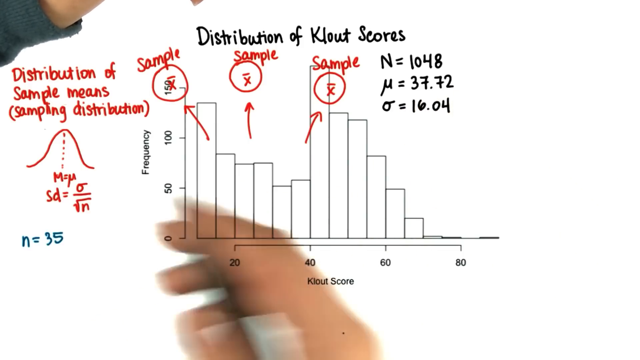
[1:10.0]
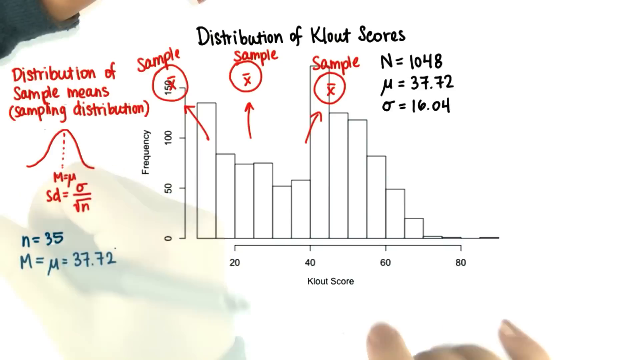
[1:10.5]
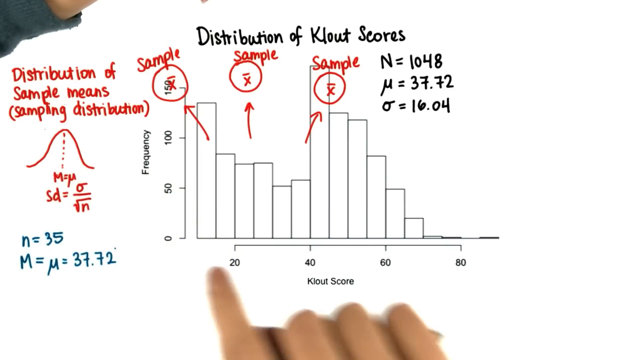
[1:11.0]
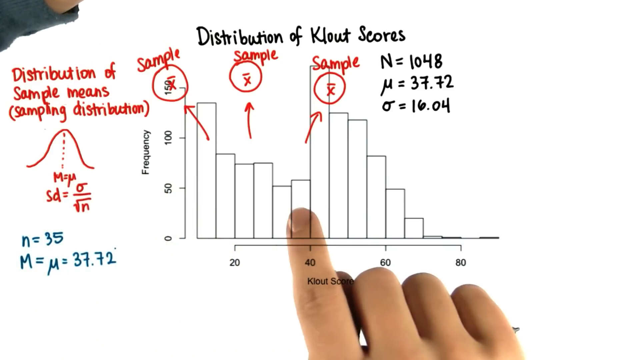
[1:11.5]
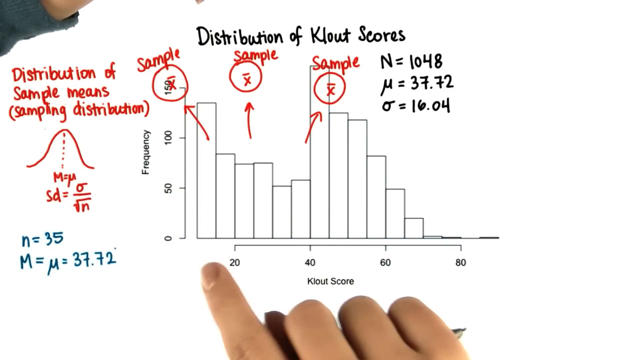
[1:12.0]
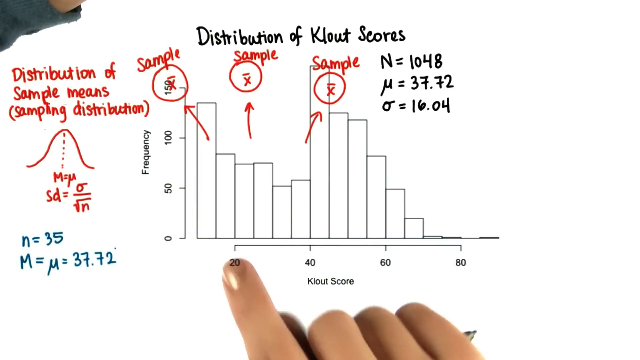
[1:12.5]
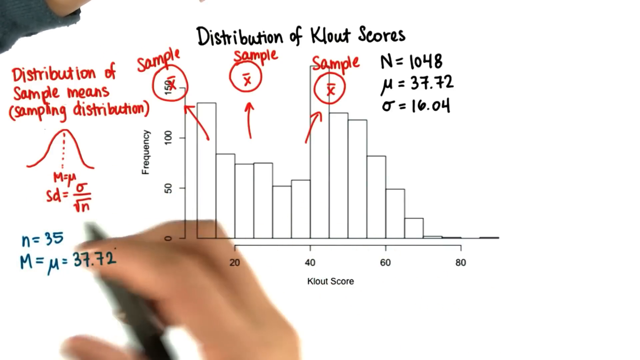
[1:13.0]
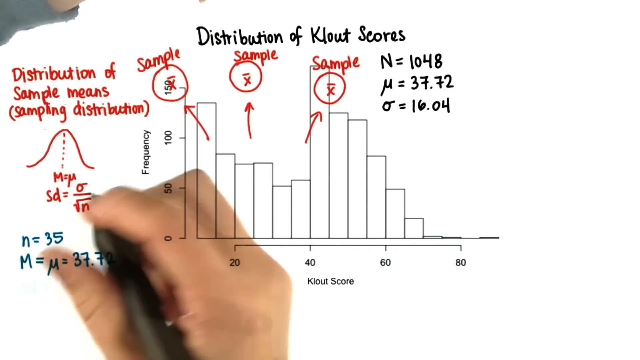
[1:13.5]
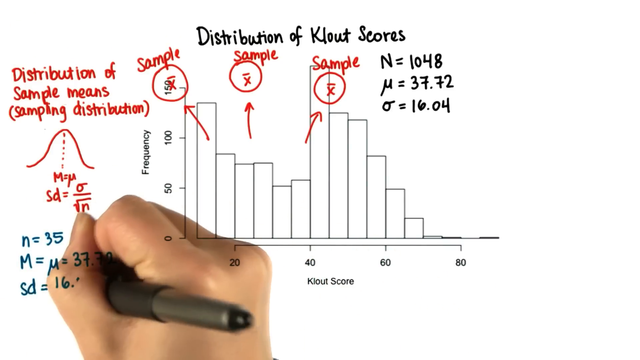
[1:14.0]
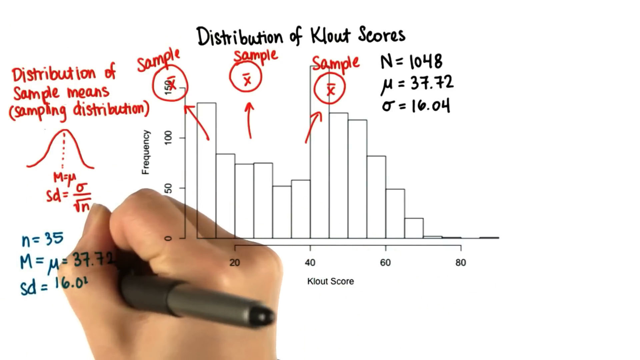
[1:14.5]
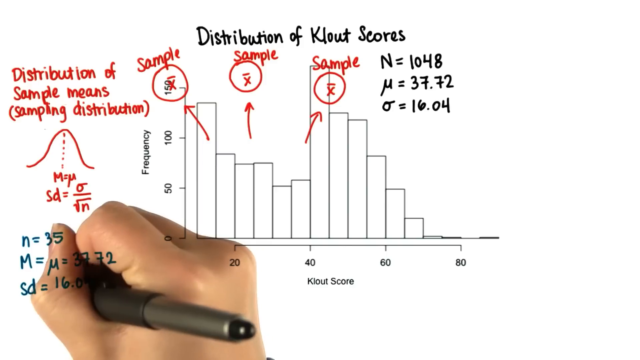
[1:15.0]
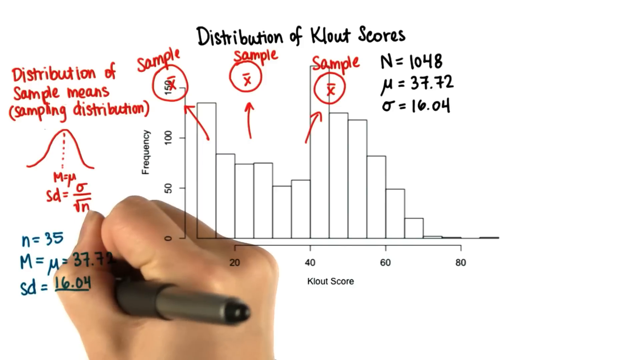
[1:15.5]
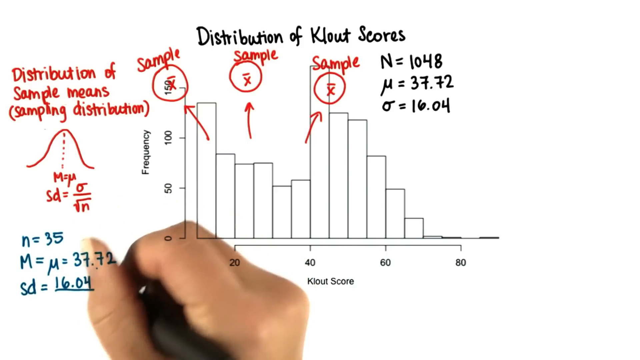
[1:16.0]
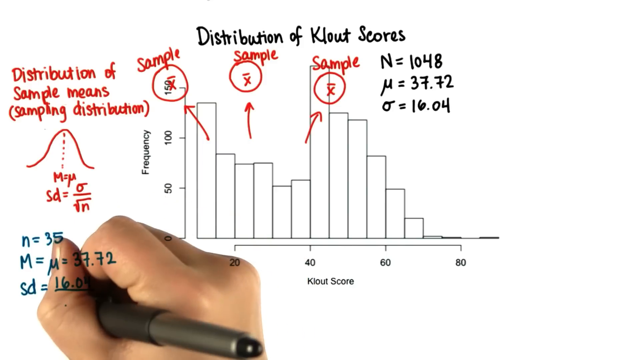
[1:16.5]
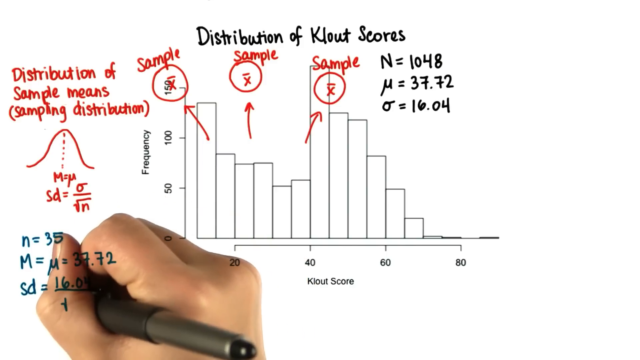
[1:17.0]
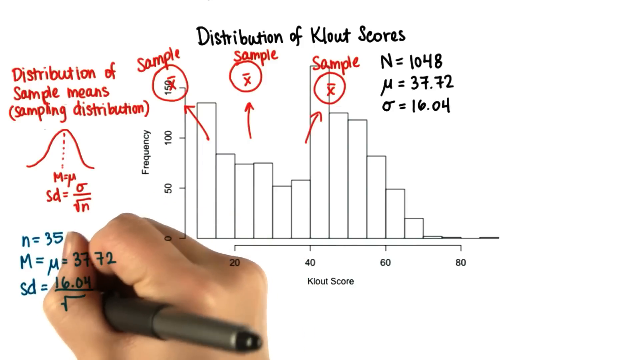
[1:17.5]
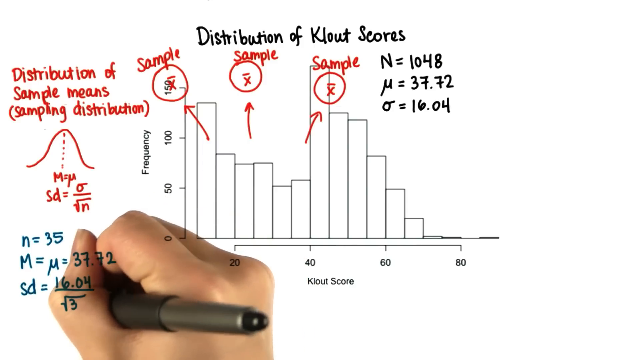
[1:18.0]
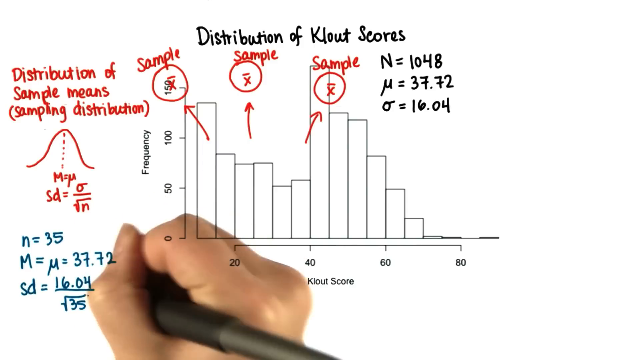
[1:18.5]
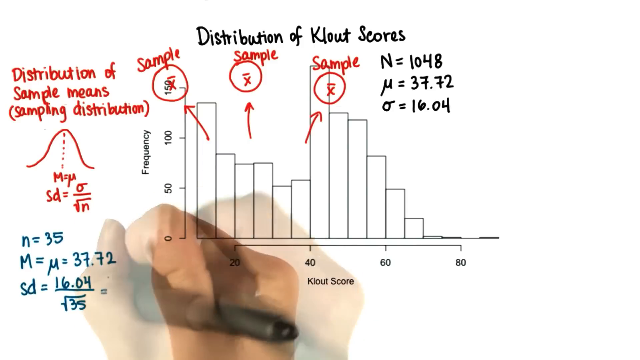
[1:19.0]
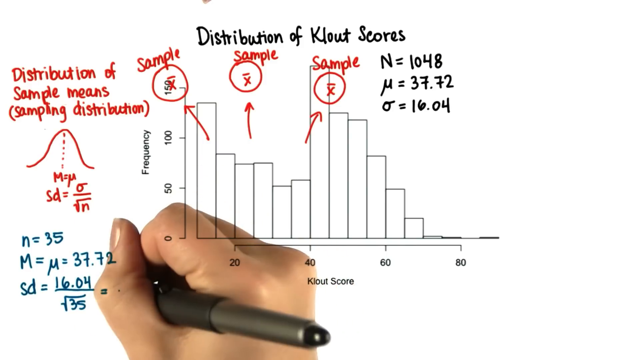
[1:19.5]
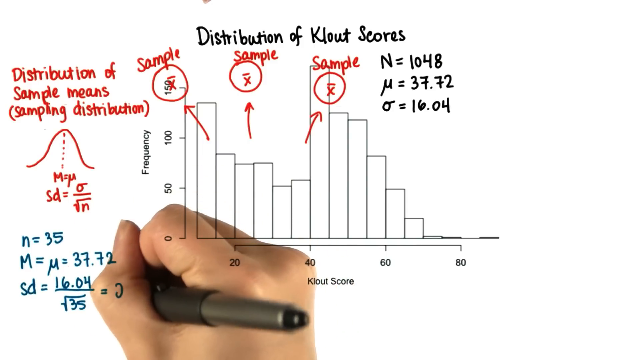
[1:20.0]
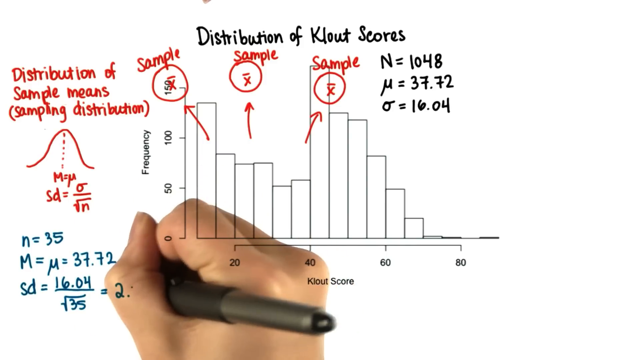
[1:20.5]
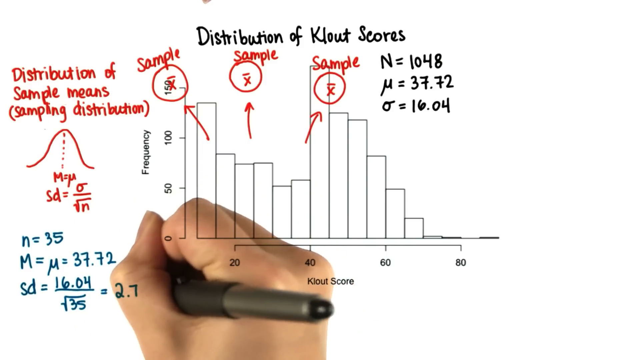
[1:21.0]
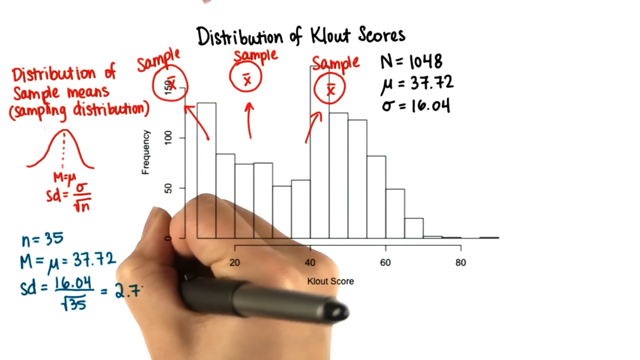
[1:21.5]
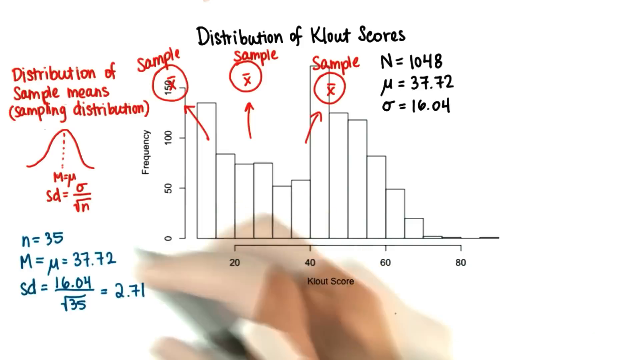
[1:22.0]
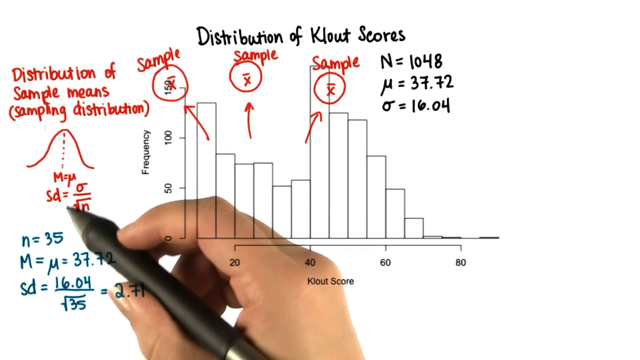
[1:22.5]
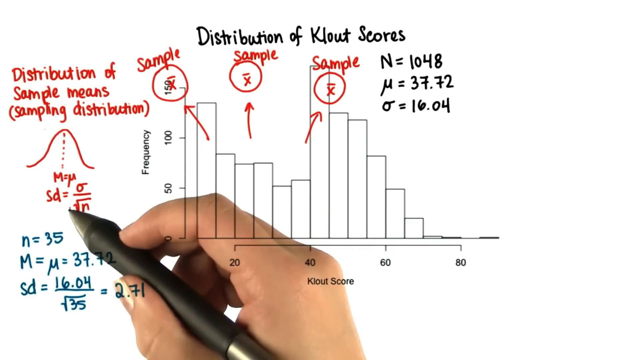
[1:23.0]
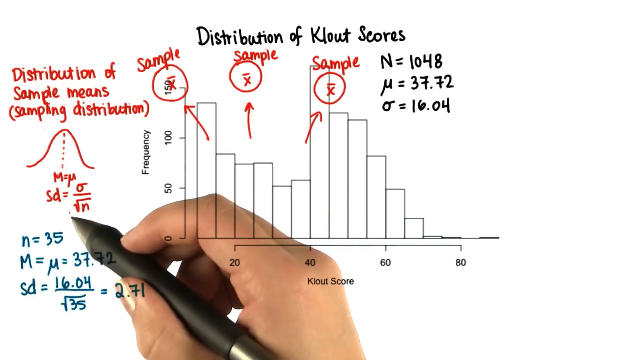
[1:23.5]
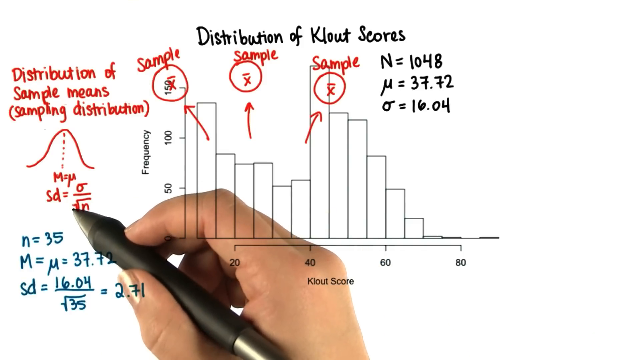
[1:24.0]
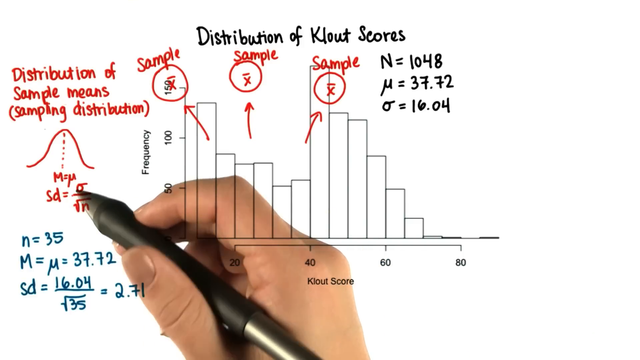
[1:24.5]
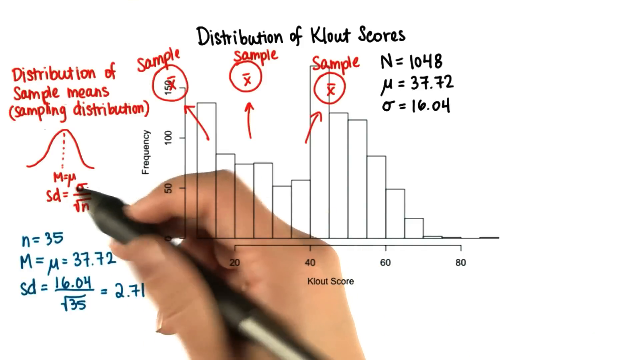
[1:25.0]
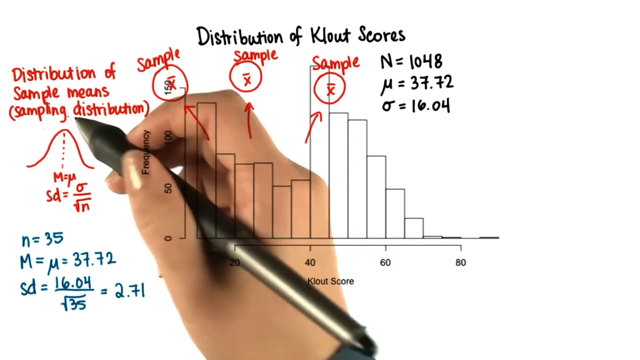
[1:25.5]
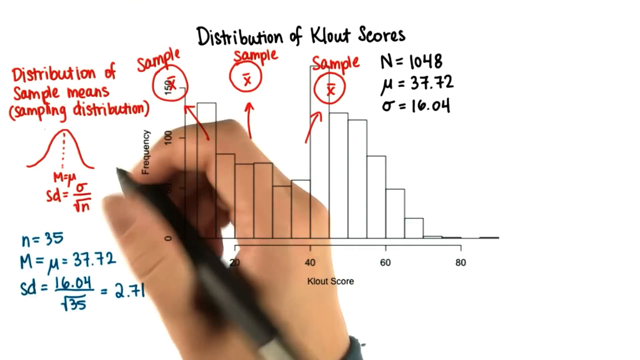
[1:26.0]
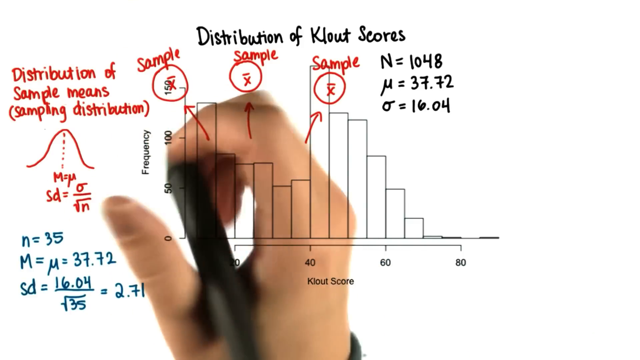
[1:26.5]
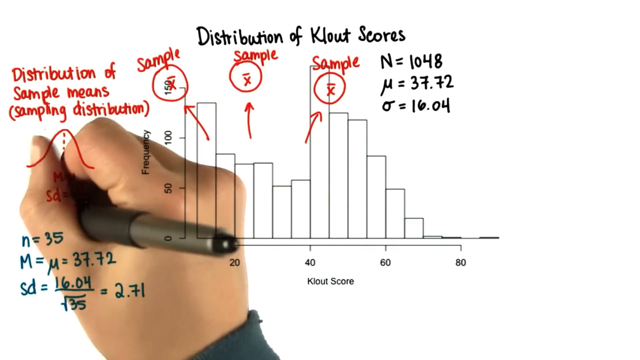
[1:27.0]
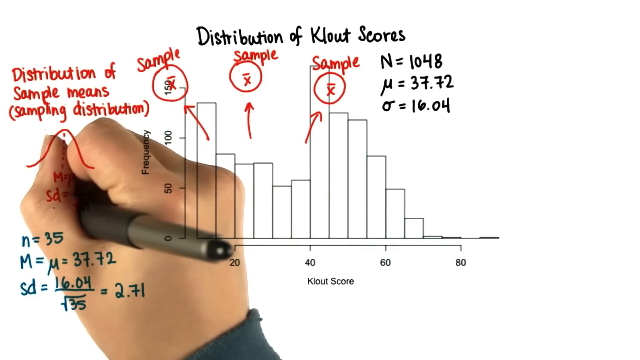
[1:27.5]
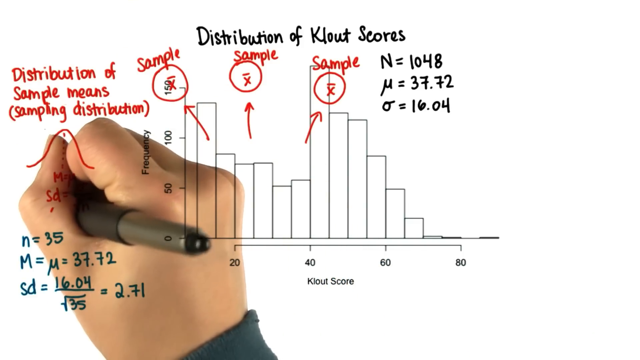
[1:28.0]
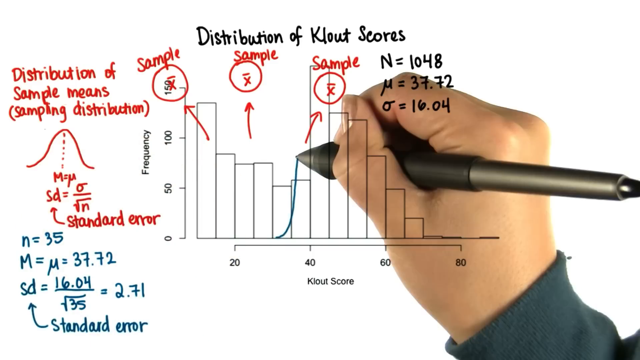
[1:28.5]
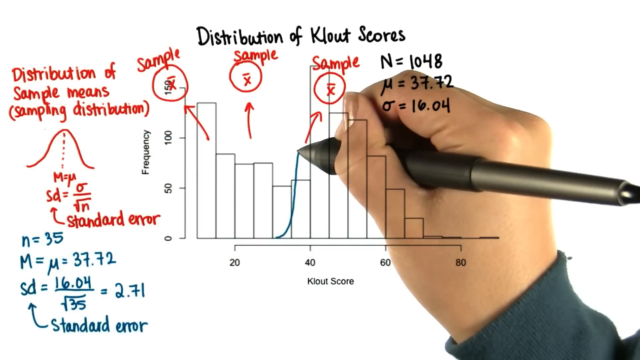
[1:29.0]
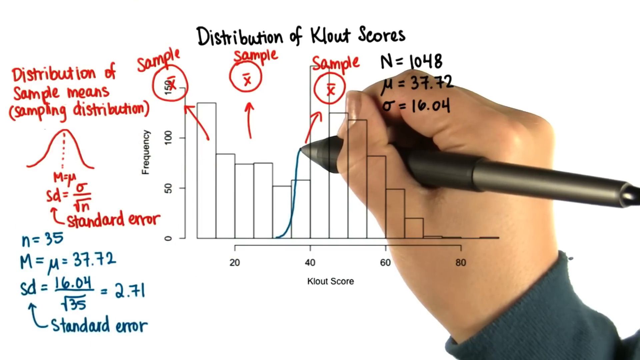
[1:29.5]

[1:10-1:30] On the white background the same graph titled "distribution of clout scores" is shown with the same frequency and horizontal axes and bars. The black writing "N = 1048," the strange U "= 3772" and the O with a line "= 1604" remains, along with the red writing: "sample" arrows going left, right and center to circles with an X with a line above it, "distribution of mean samples" with the bell curve, and the formula "SD =" the O with a line divided by the square root of N. Blue writing now appears: "N = 35." She seems about to write more without it being shown, and a new formula appears: "M =" the strange U "= 3772." She points and gestures, then continues writing; the text comes up slowly and only the end of a number is seen being written, giving "SD = 1604." She underlines 1604, adds the square root of N, and writes "= 2.71," all in blue. She moves her pen around, holding it like a fist. Then in red she writes "standard of error" underneath the SD formula, with an arrow pointing up to SD. She then draws a blue line in the center of the graph.